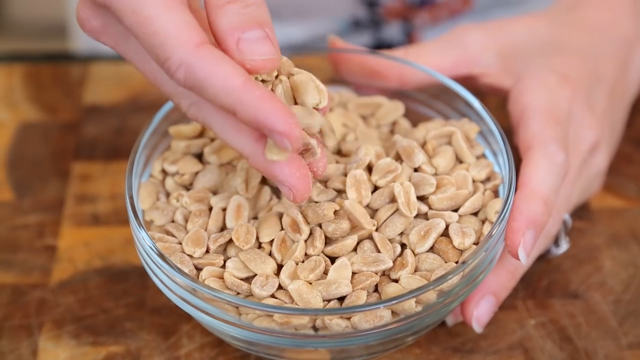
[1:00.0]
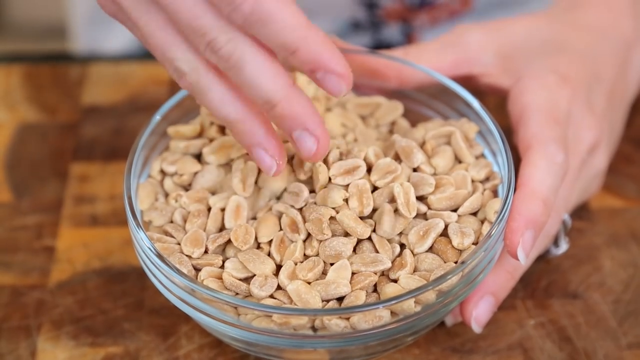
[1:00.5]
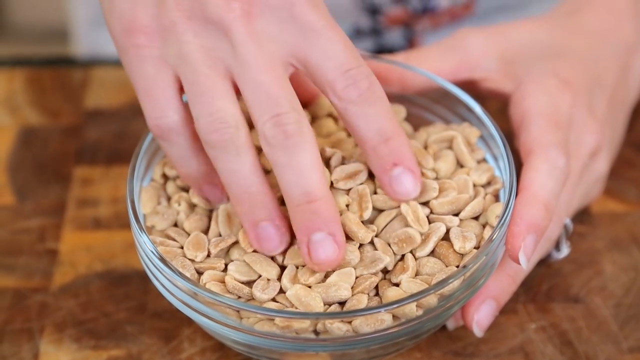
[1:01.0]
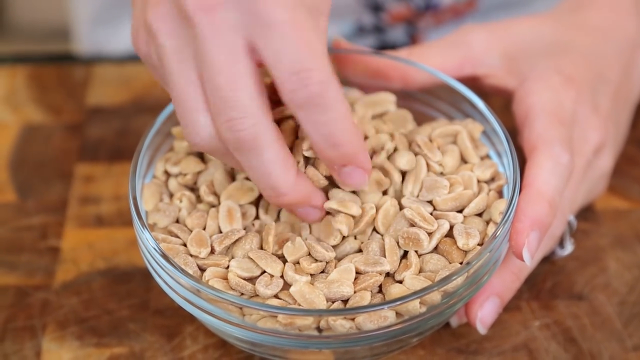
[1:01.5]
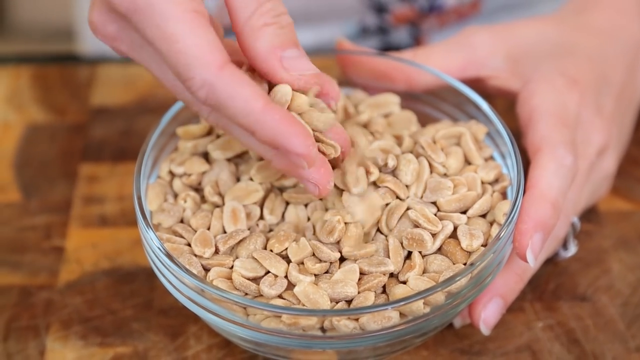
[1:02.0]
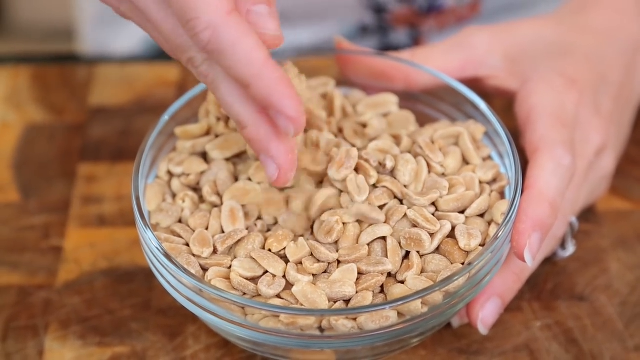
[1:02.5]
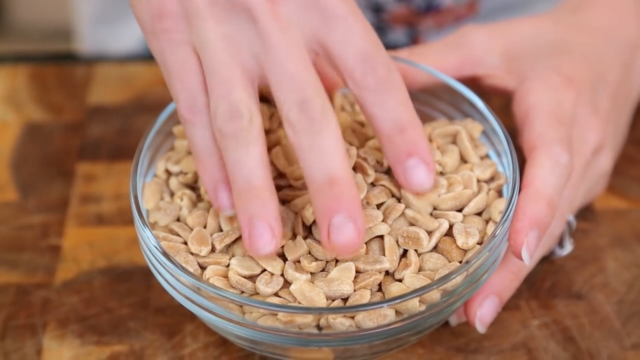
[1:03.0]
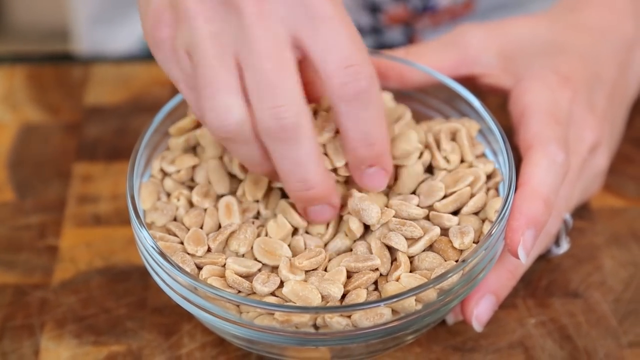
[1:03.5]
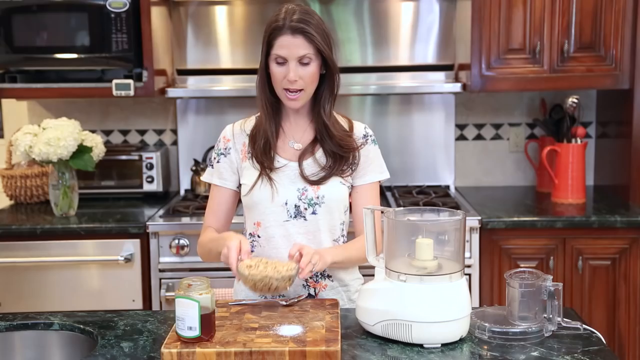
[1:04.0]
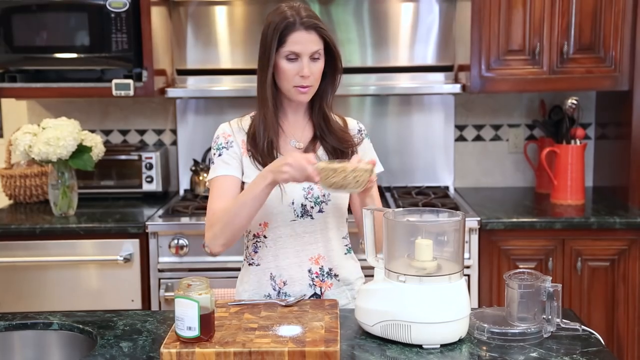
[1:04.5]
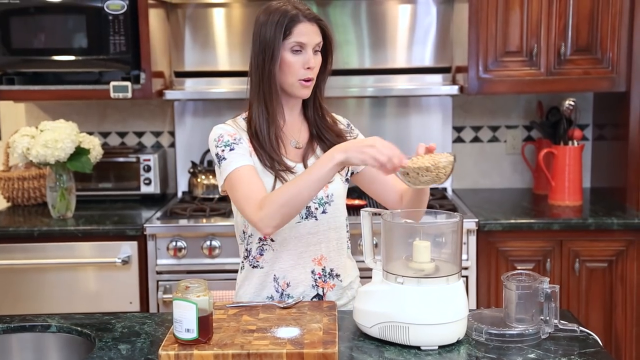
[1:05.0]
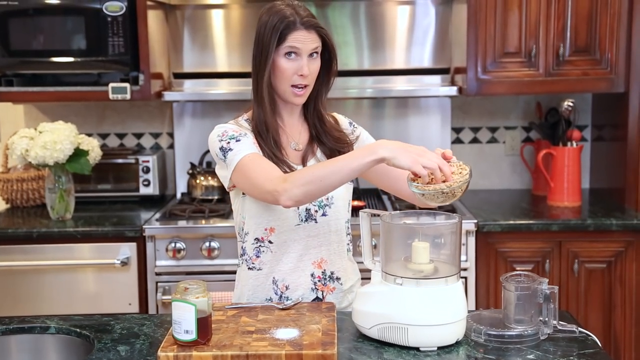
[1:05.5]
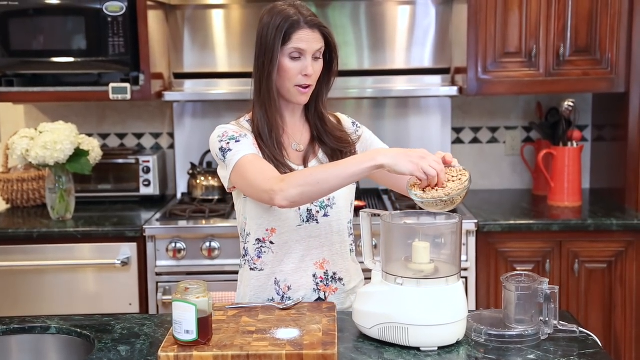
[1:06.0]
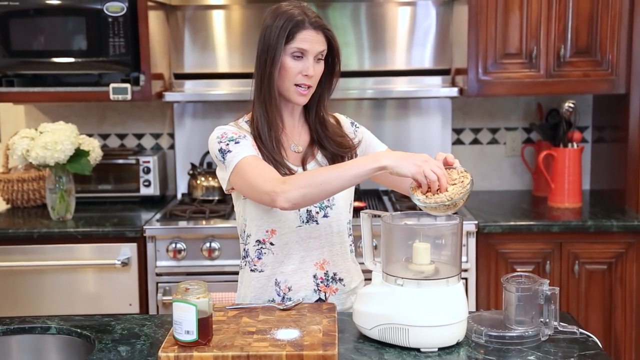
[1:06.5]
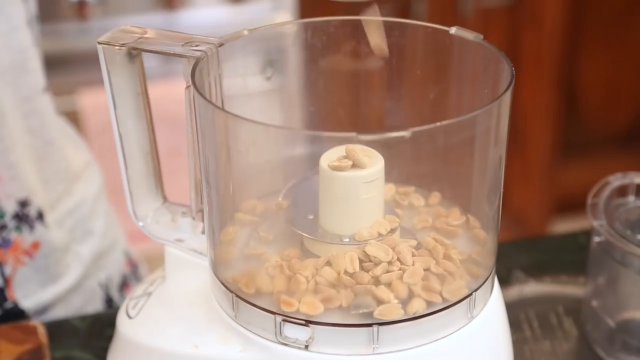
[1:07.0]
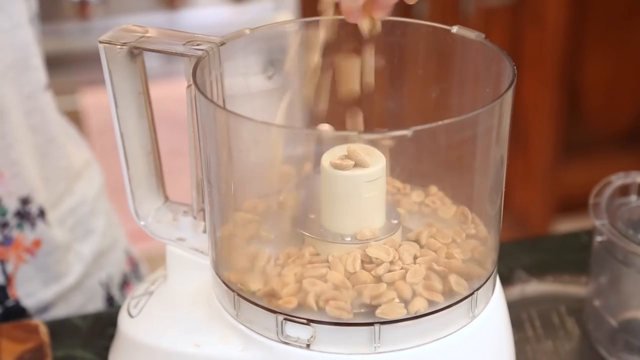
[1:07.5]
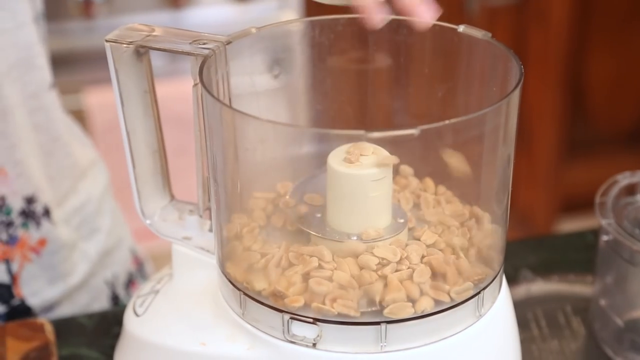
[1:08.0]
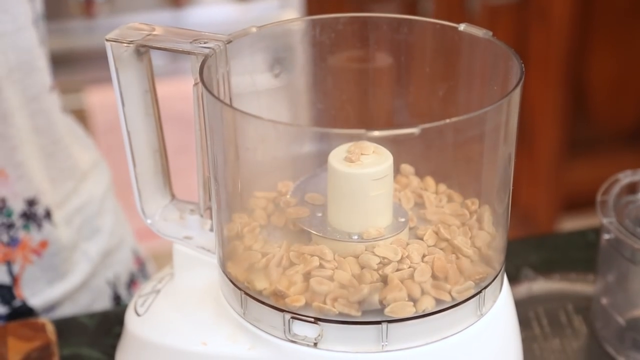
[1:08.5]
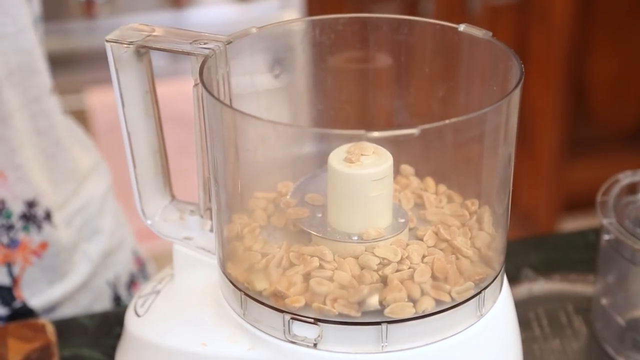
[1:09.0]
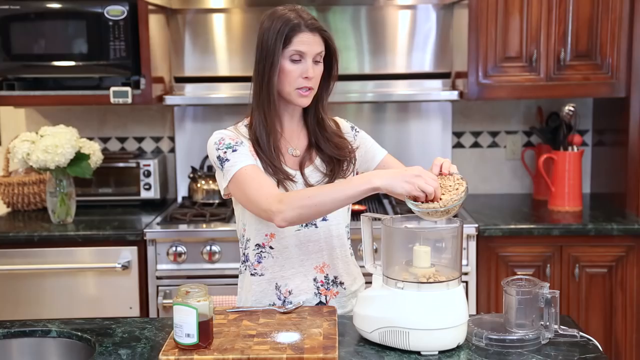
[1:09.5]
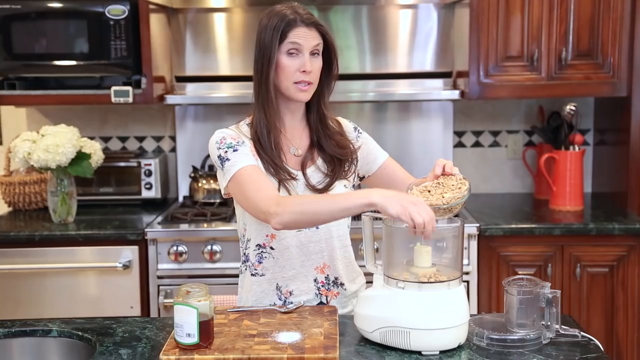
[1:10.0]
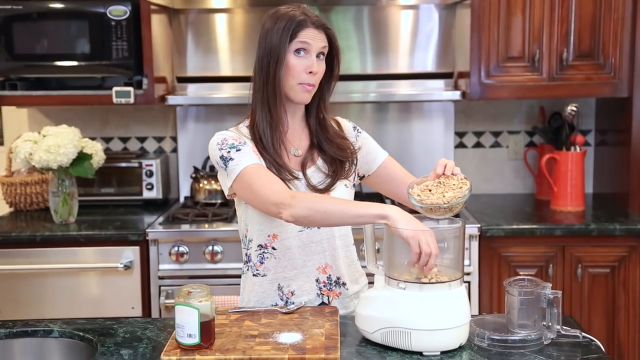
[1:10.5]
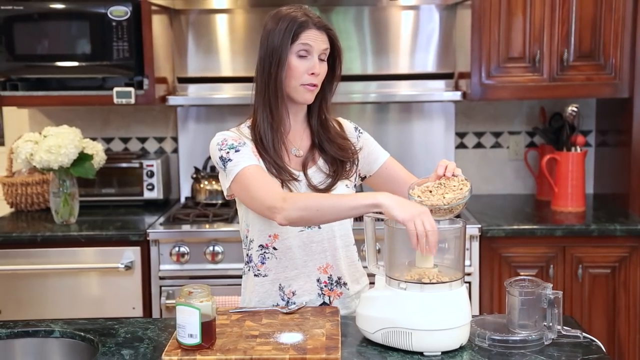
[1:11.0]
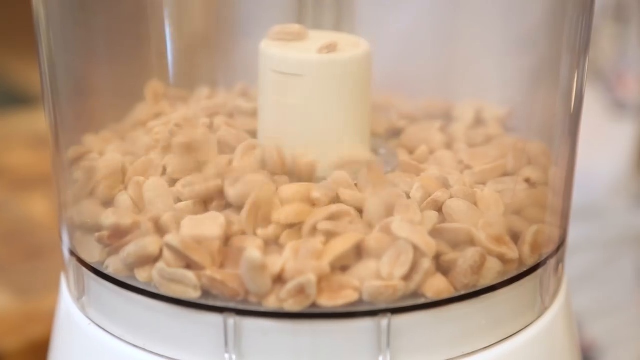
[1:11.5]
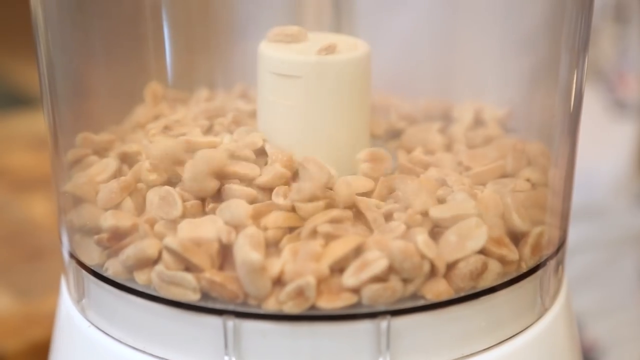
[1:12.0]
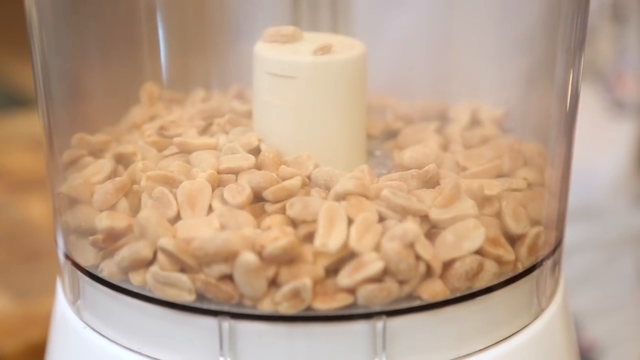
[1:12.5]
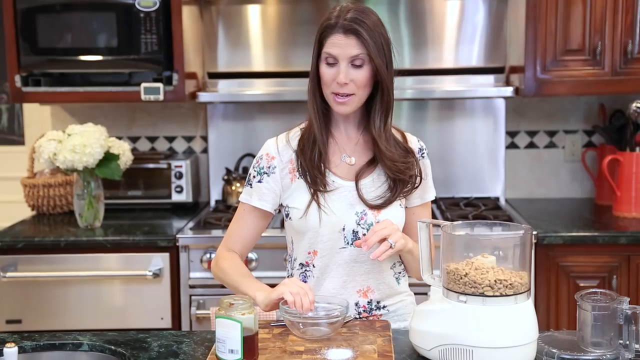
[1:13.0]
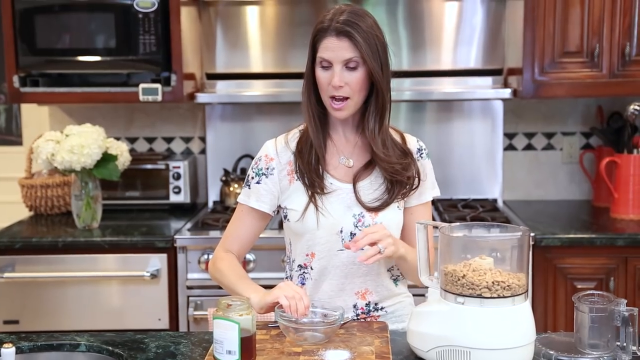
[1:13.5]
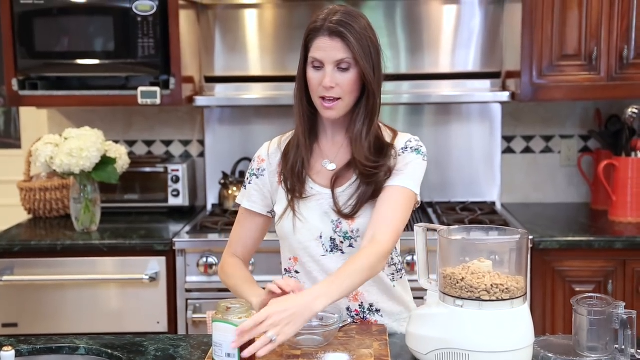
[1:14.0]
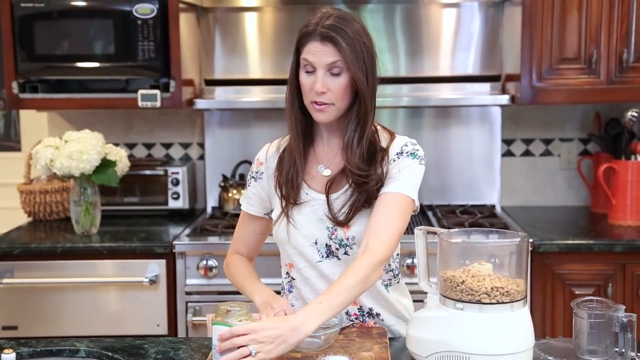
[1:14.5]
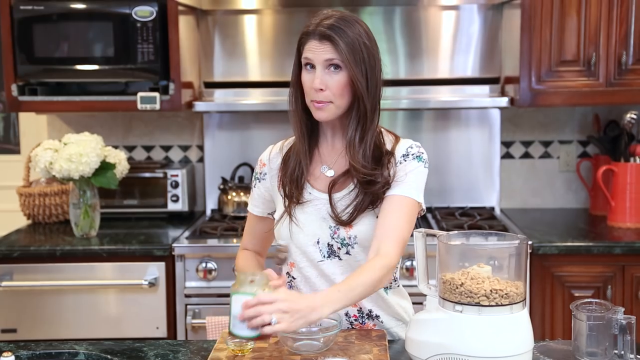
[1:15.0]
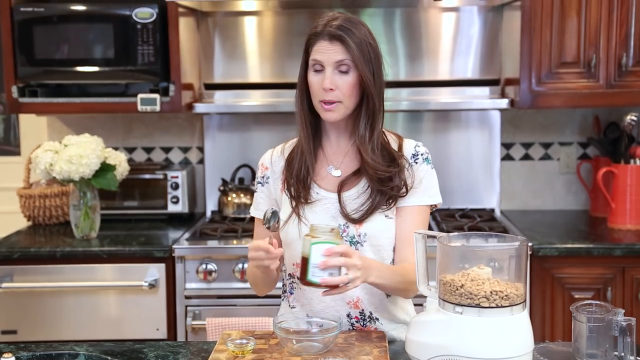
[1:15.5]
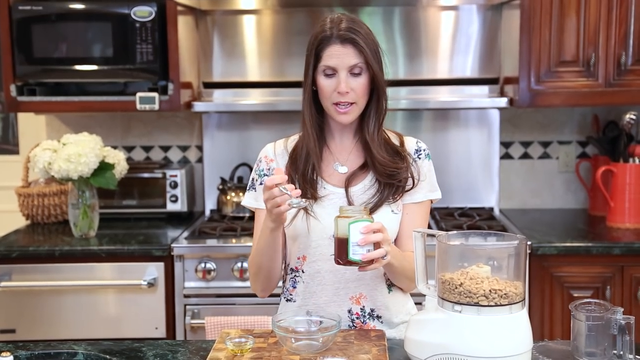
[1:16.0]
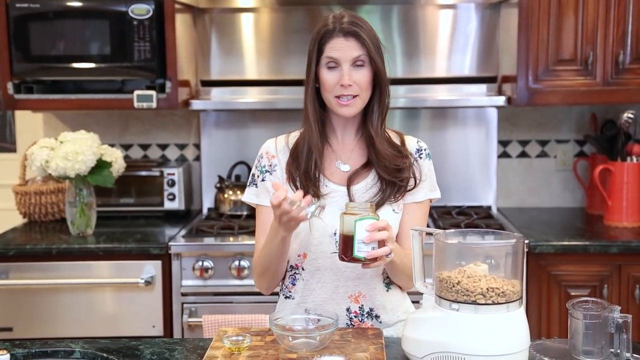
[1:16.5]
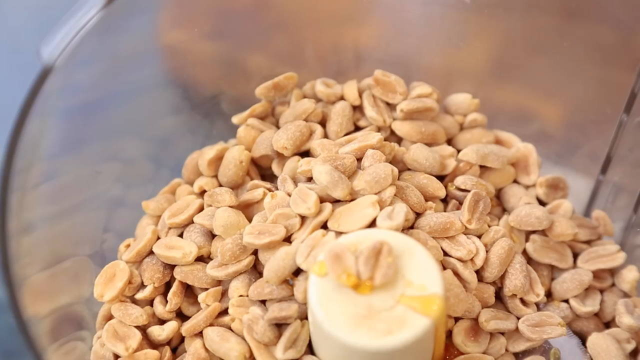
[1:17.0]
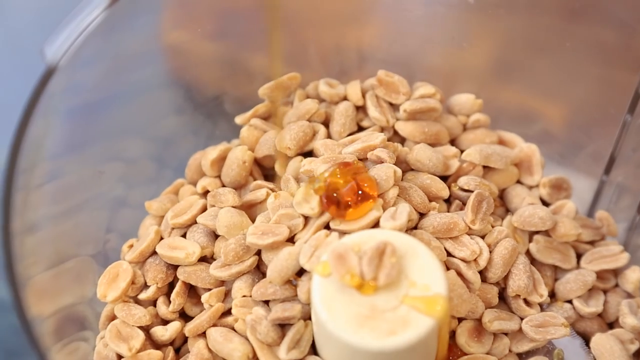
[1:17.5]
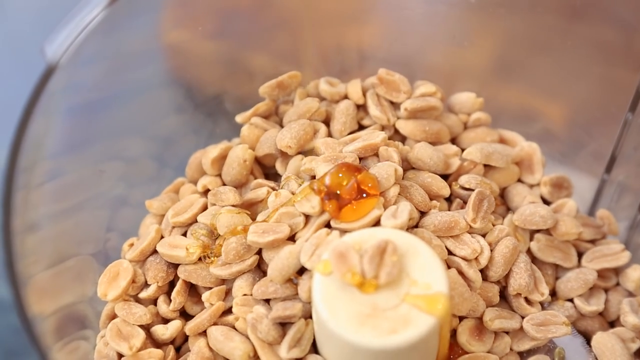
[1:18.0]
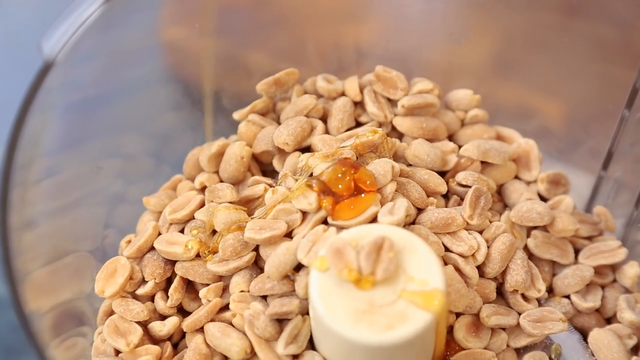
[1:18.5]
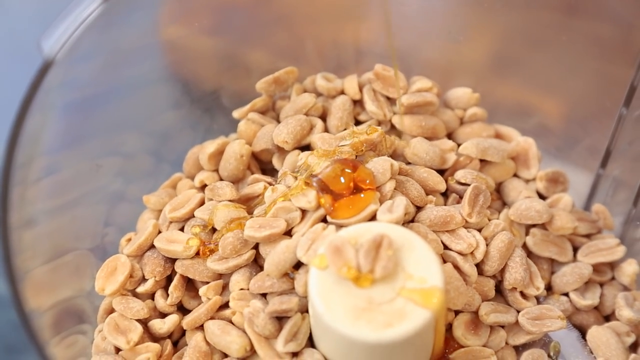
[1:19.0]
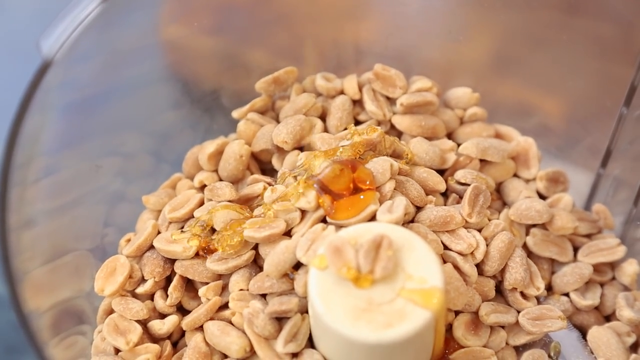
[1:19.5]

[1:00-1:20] Hands hold what appear to be peanut seeds in a glass bowl; the right hand holds the bottom of the bowl while the left hand moves through the seeds. She picks up some seeds and pours them back into the same bowl. The camera then zooms out, revealing a white blender on the right-hand side, and she pours the peanuts into the white blender, which has glass at the top. The seeds are seen flowing into the blender from an outside angle. She then scoops up honey and pours it into the mixture in the blender. The ingredients are on the table she is working at, which is brown and dark brown with designs on top.